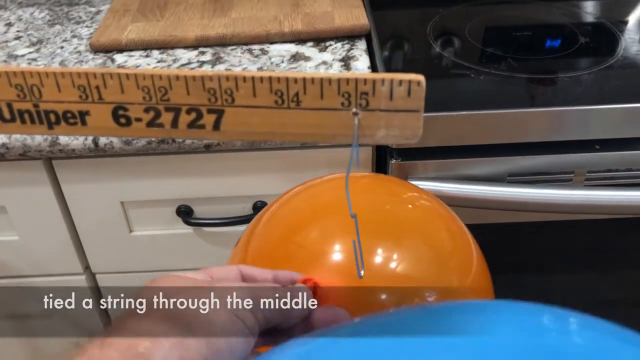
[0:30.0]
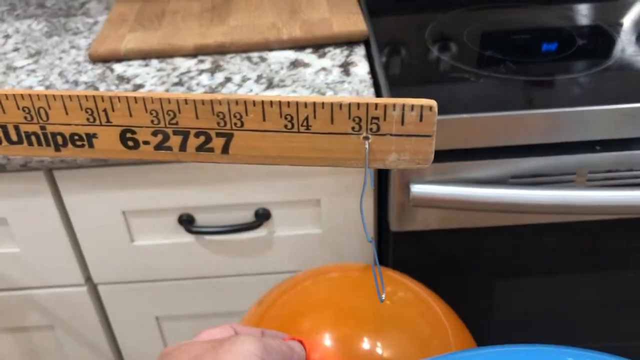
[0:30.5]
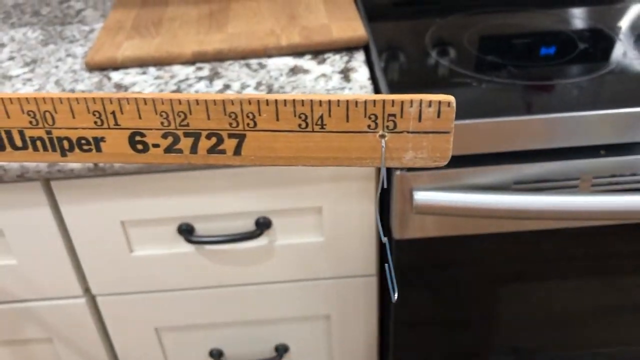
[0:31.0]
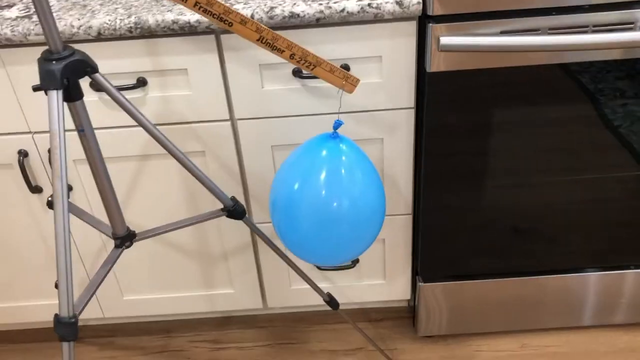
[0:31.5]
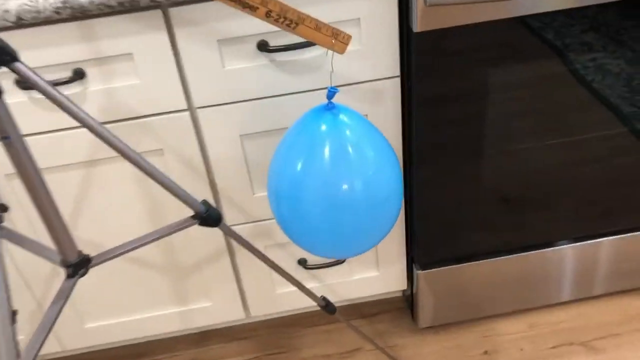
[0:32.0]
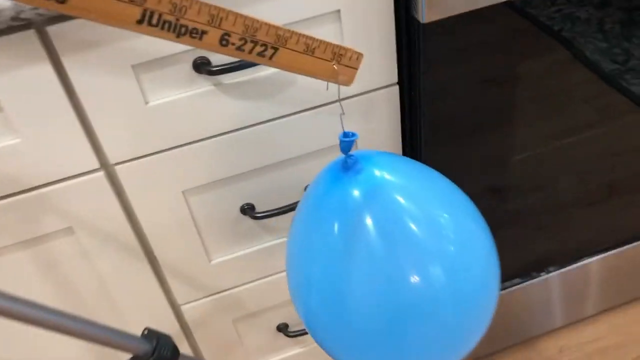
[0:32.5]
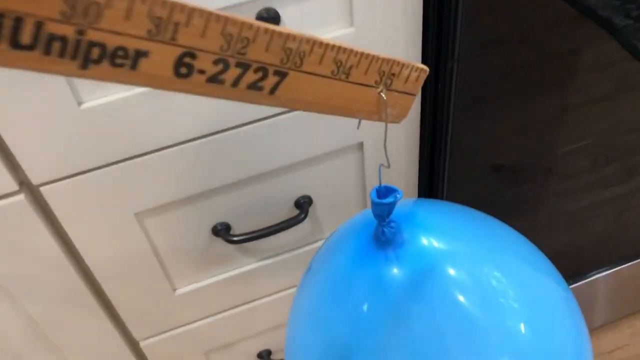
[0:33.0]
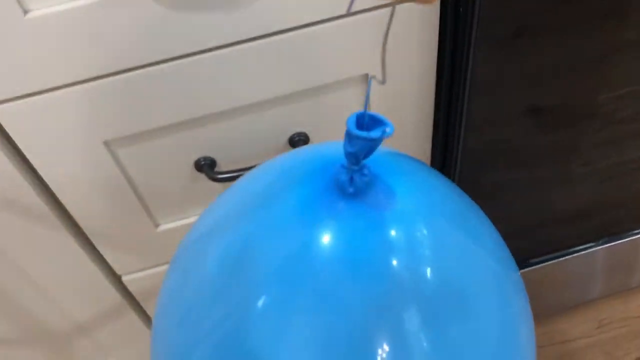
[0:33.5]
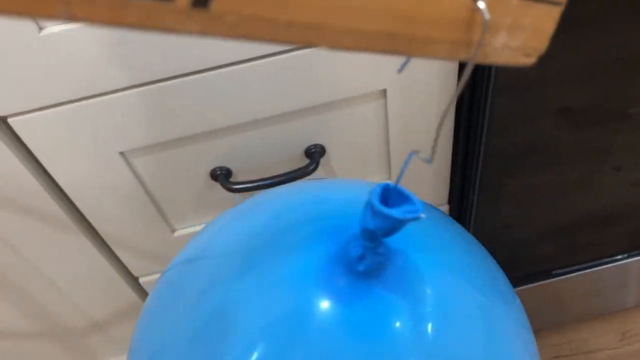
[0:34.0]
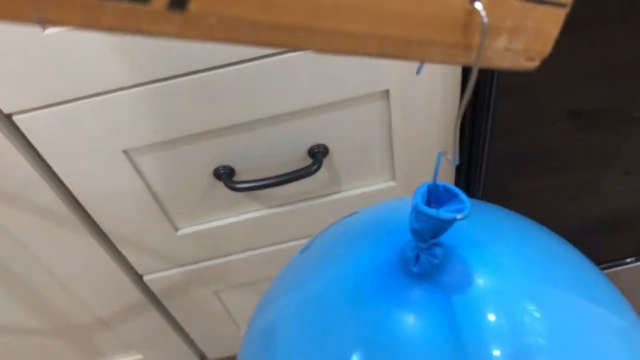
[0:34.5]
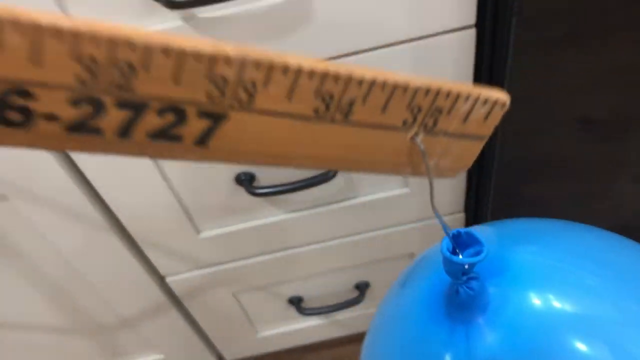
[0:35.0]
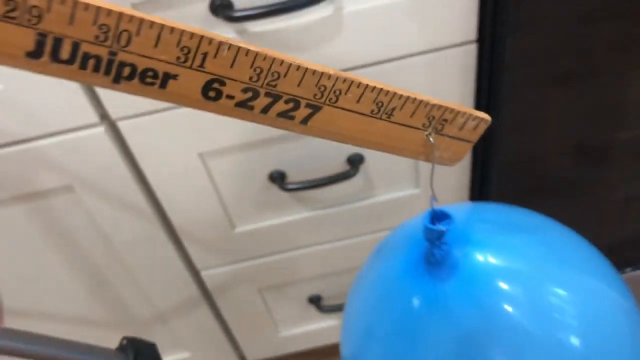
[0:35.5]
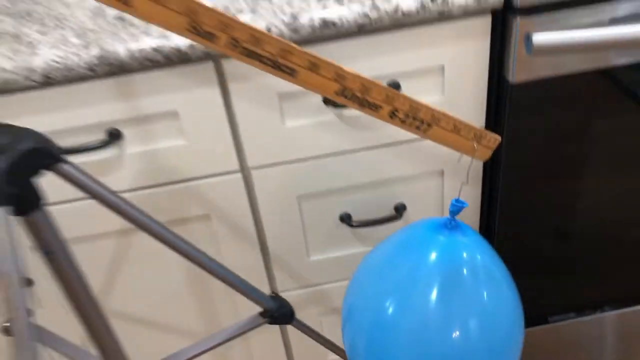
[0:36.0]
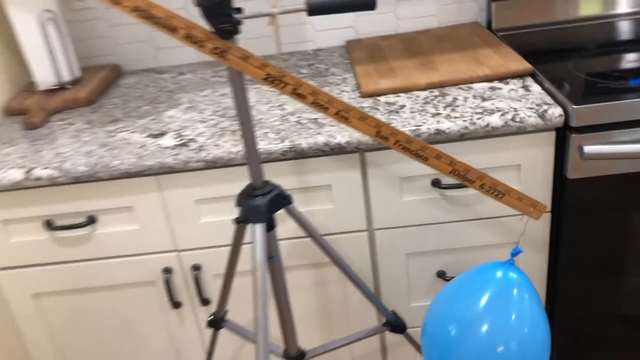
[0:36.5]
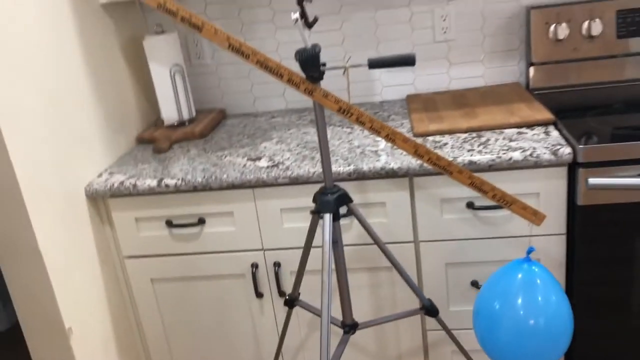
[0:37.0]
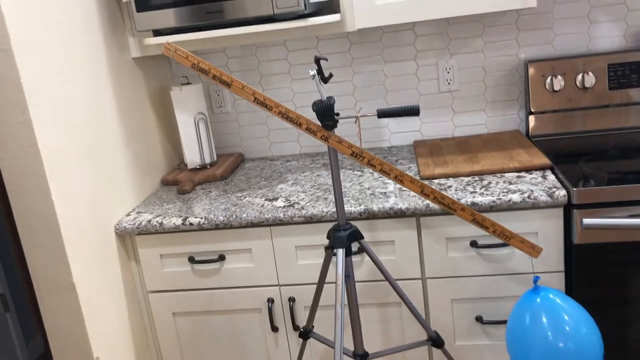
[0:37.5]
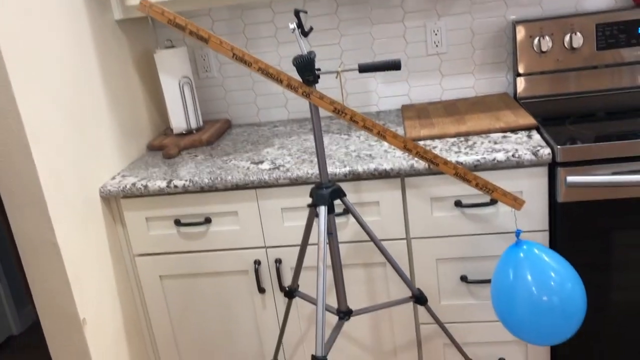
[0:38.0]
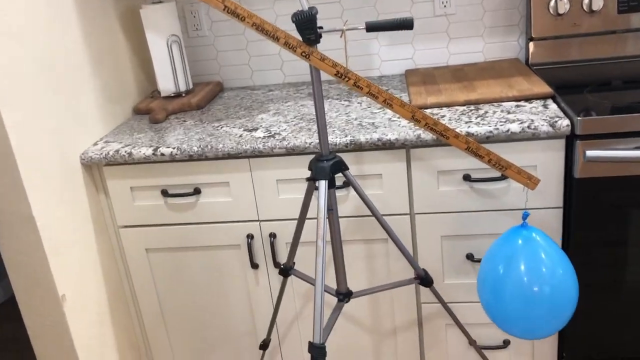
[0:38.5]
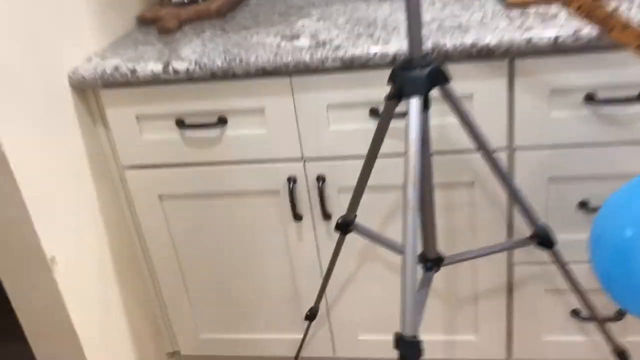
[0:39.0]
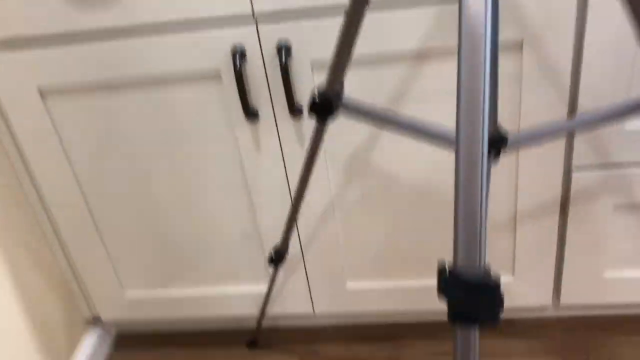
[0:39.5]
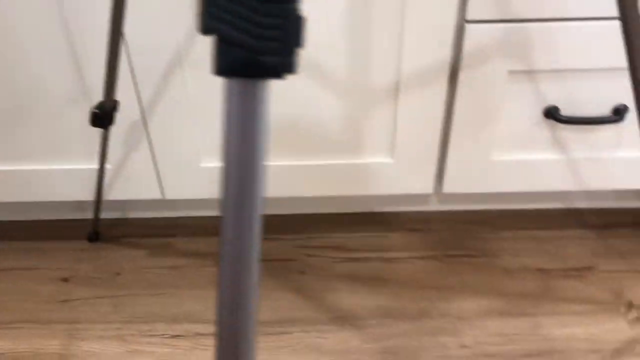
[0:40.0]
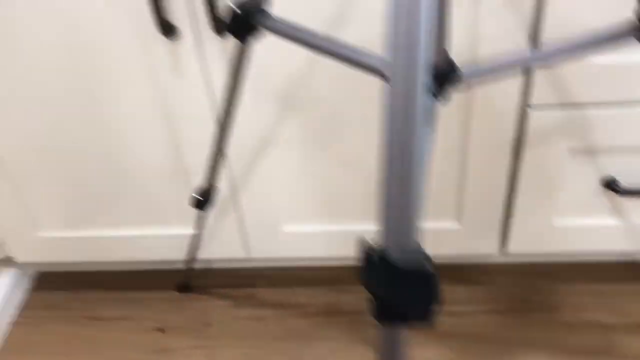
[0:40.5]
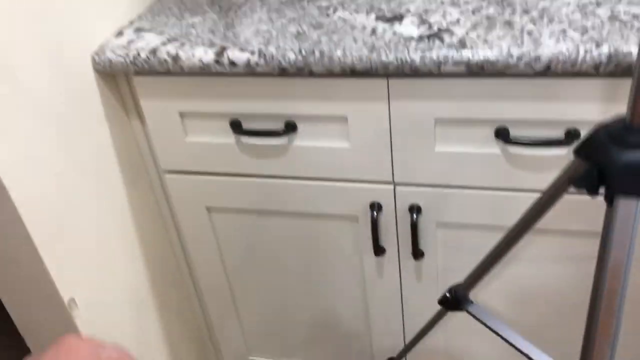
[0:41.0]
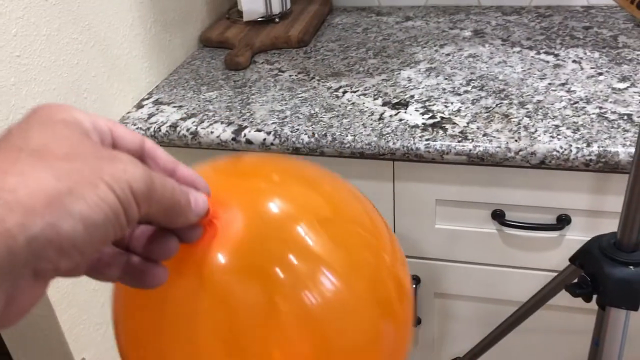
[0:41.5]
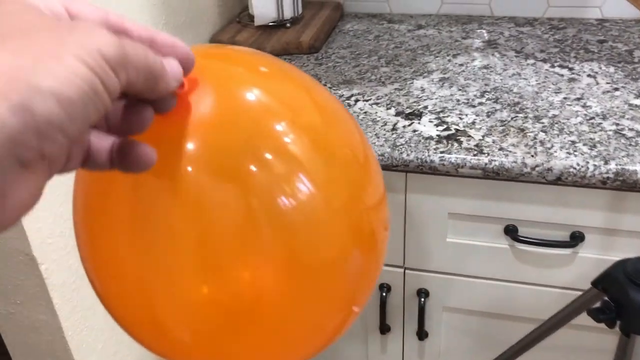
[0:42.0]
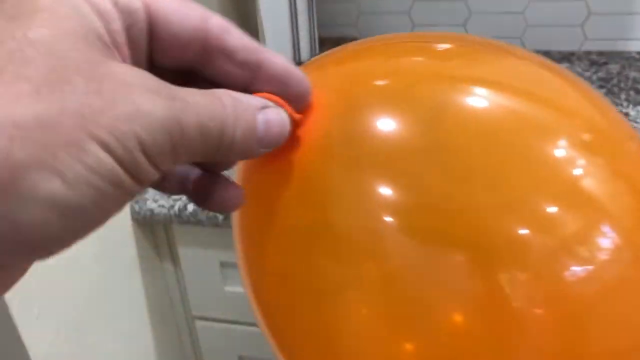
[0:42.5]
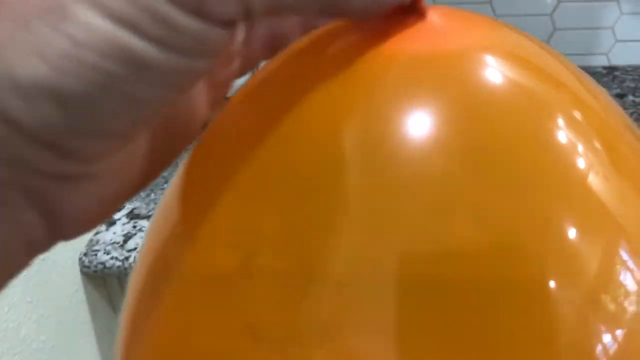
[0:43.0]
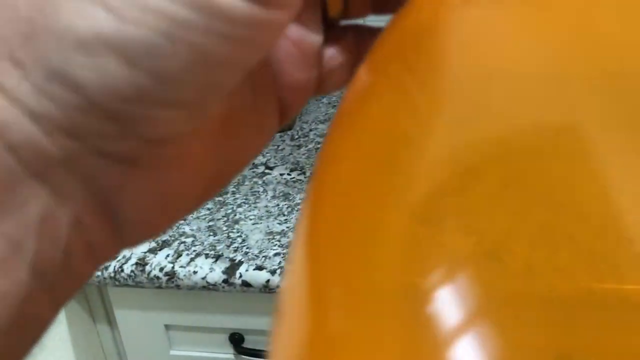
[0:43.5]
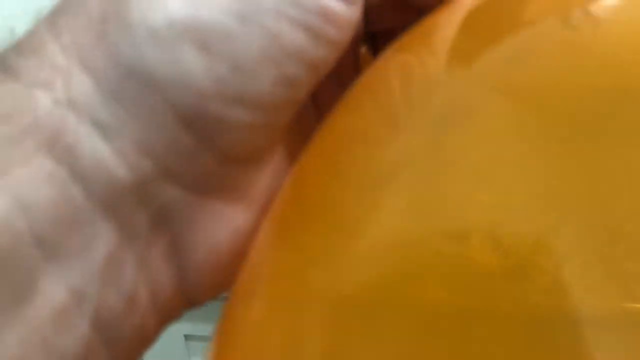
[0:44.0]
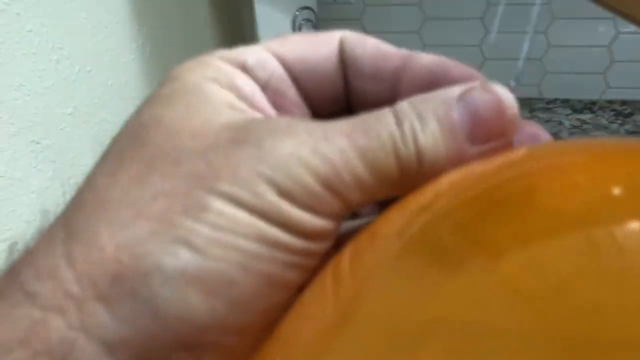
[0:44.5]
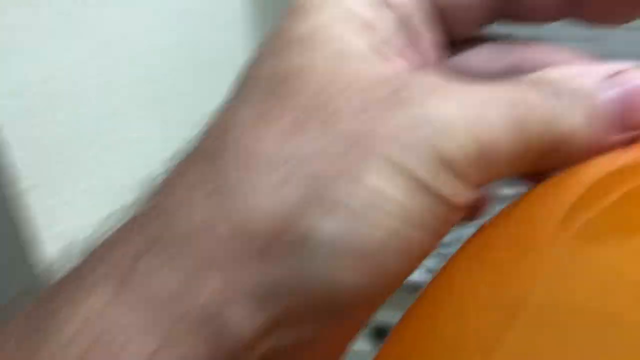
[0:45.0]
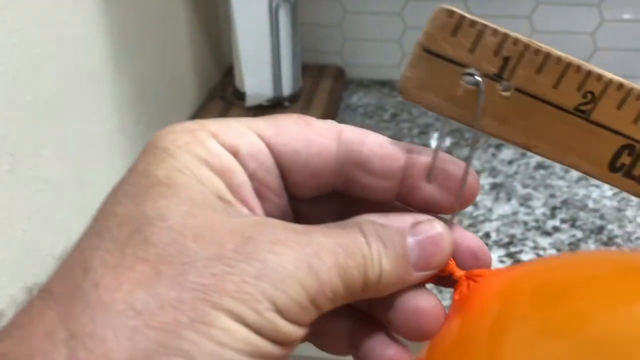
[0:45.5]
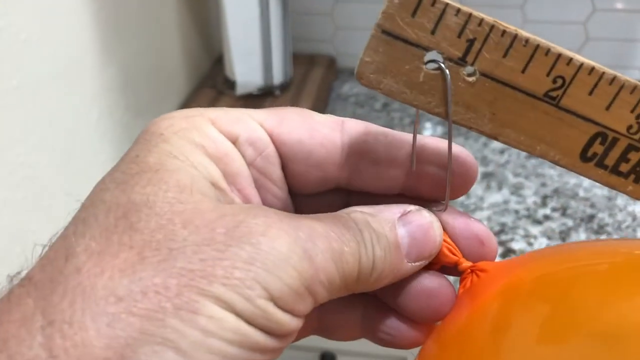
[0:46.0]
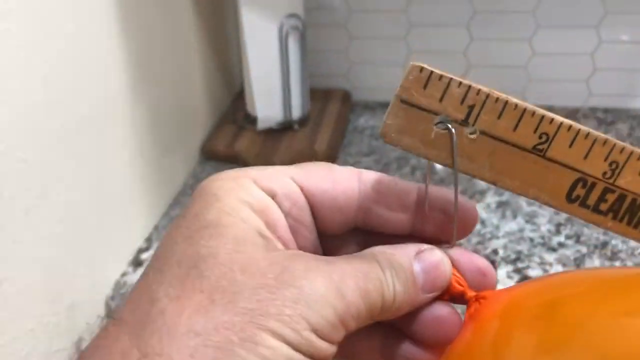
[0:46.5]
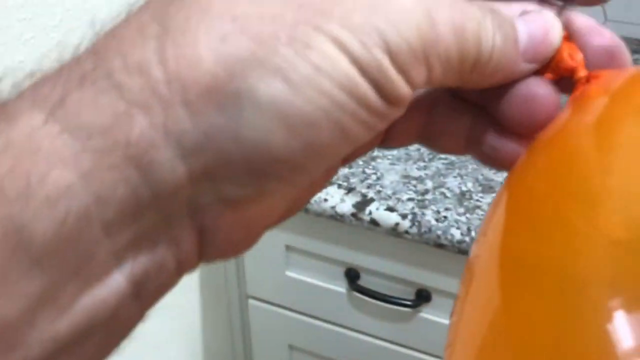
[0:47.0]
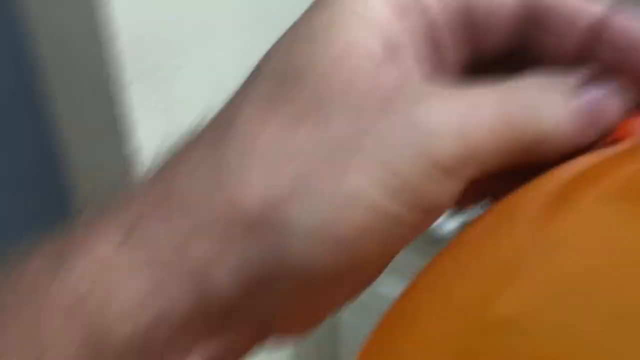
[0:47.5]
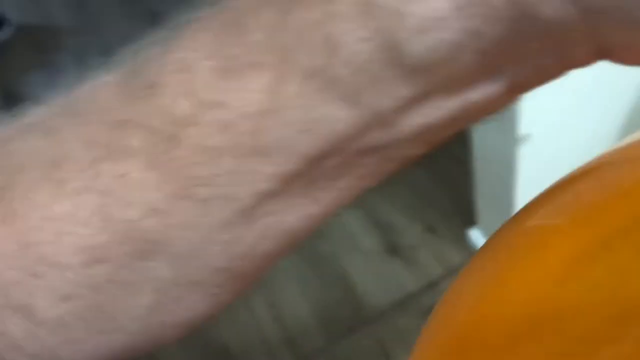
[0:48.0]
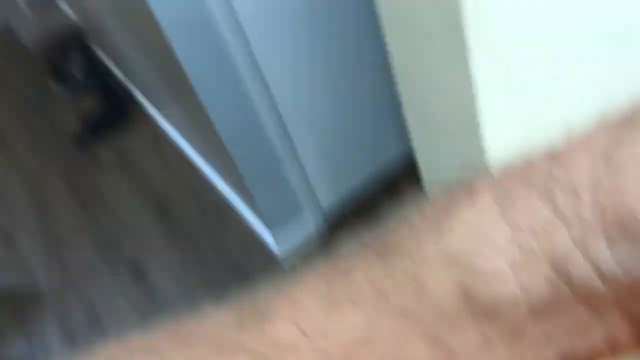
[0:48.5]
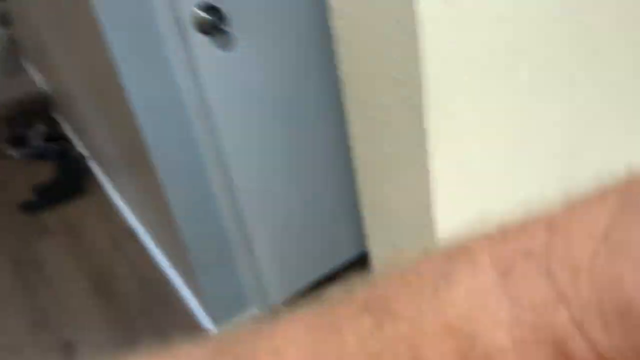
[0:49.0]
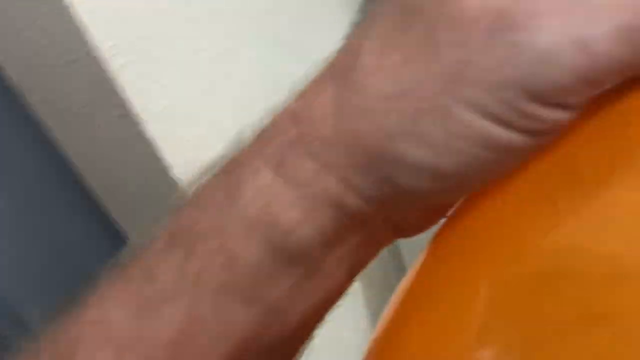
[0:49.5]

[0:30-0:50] The view is on the right side of the ruler, just below the number 35, where the paper clip is. Below it, a hand with the palm facing the camera holds the balloon, about to hook it onto the paper clip. Beyond this, a stove is on the right side, a marble countertop on the left, and a white drawer with a black handle in front. The balloons move off the bottom, and the blue balloon is shown attached as the camera zooms back in on the right side; the balloon bounces and sways back and forth. The camera zooms way back, comes in closer toward the bottom of the tripod leg, then moves up. A hand comes up from the bottom left with the balloon, thumb toward the camera and pointer finger behind it holding the balloon, and hooks it onto the paper clip at the number one. The camera pans a little left, showing down the hallway of a house, then goes back and shows the balloon being attached again.